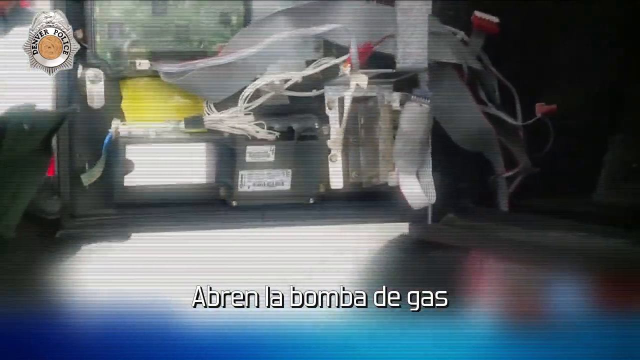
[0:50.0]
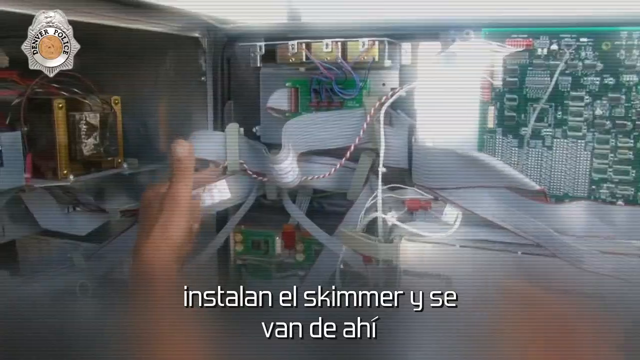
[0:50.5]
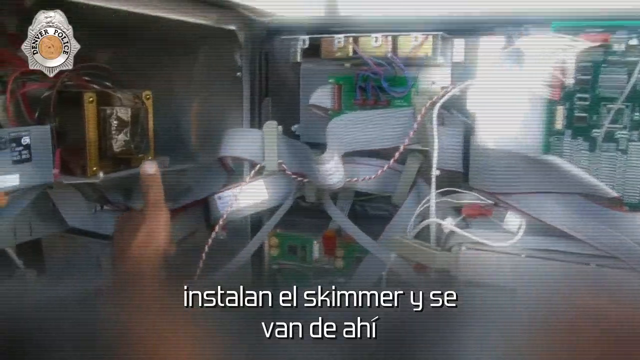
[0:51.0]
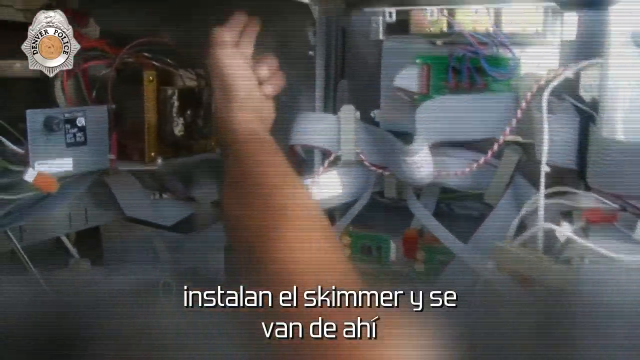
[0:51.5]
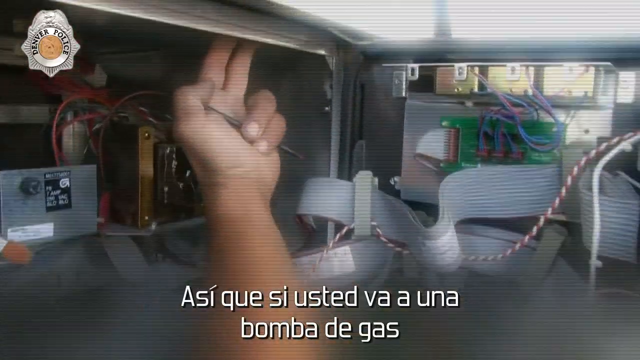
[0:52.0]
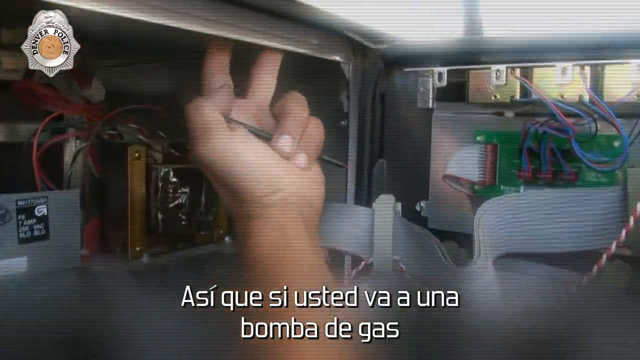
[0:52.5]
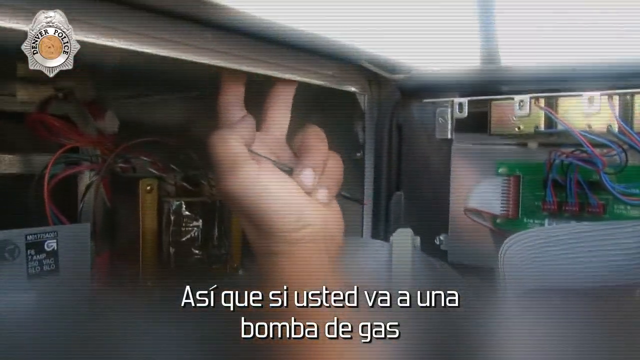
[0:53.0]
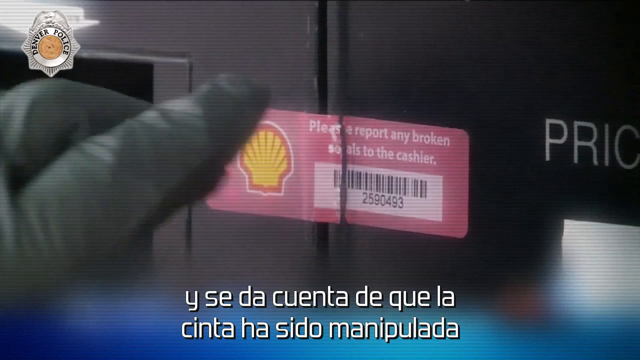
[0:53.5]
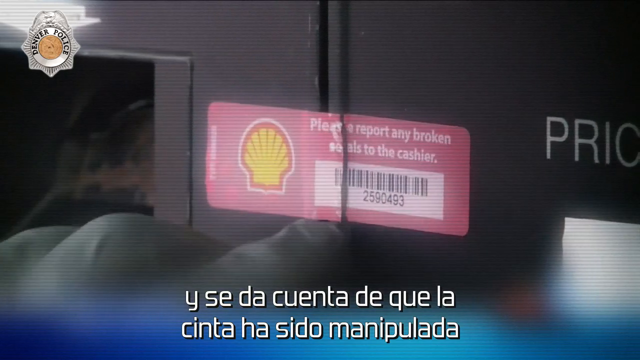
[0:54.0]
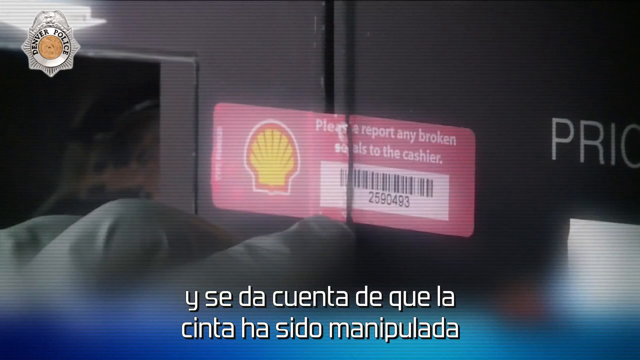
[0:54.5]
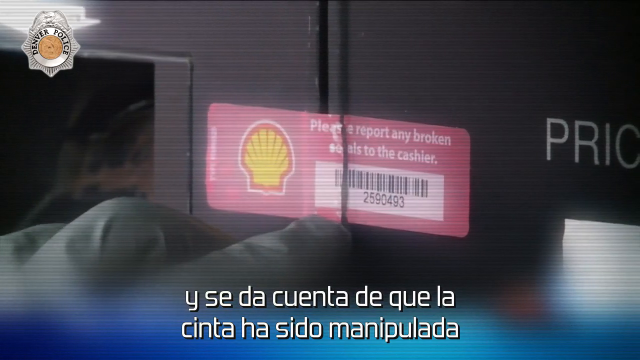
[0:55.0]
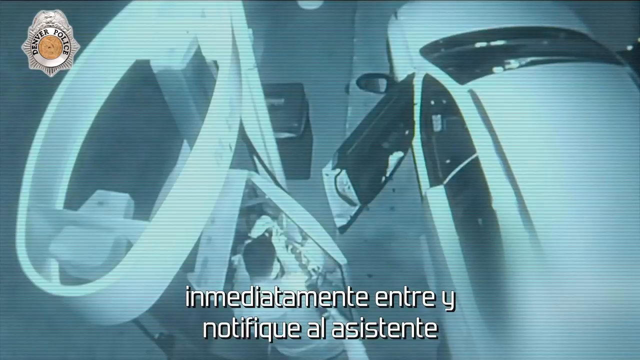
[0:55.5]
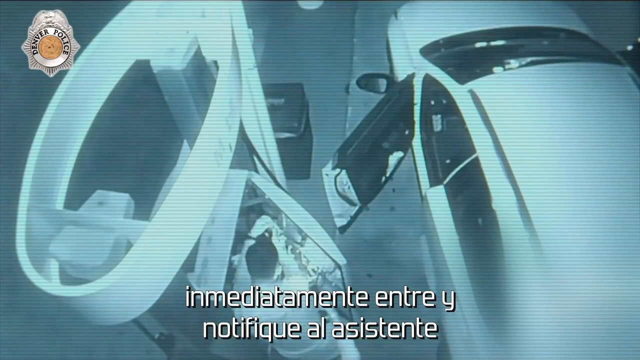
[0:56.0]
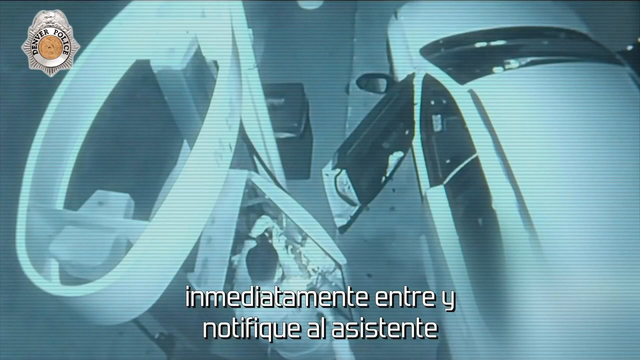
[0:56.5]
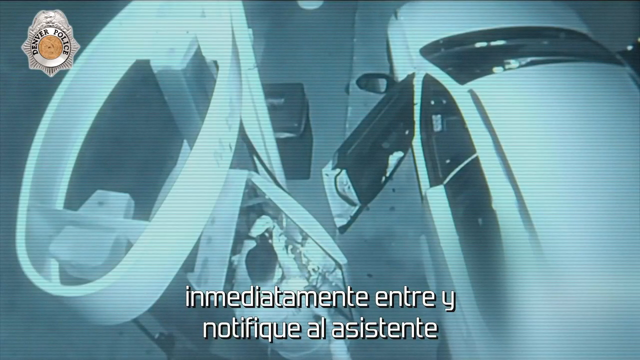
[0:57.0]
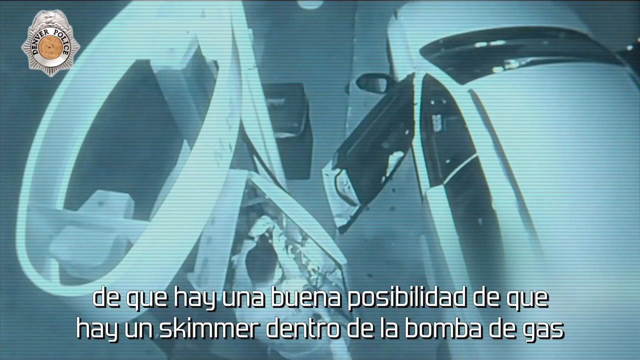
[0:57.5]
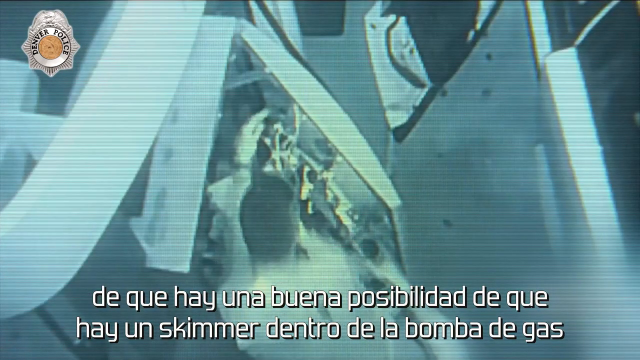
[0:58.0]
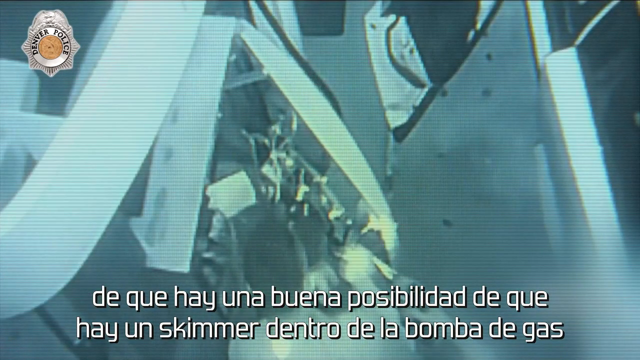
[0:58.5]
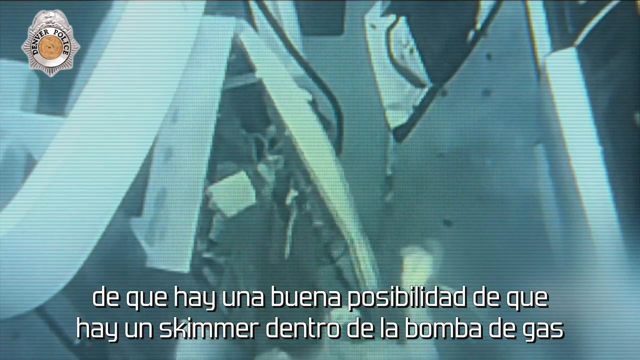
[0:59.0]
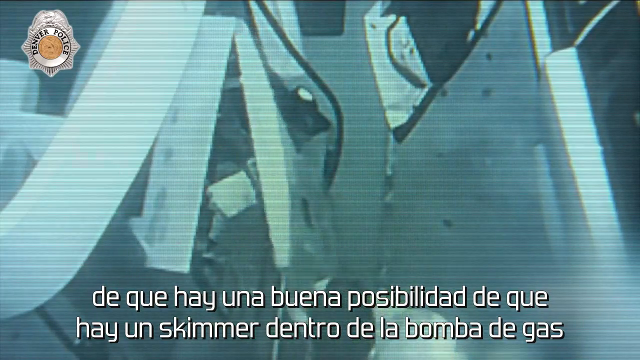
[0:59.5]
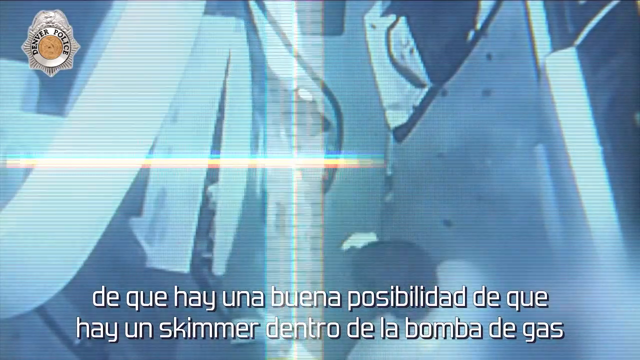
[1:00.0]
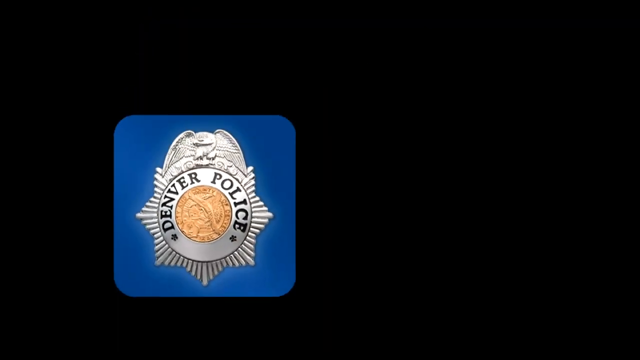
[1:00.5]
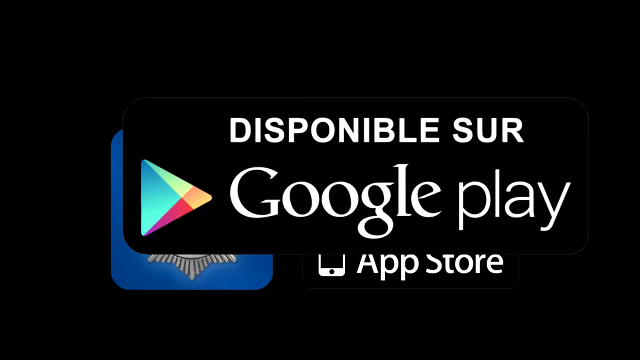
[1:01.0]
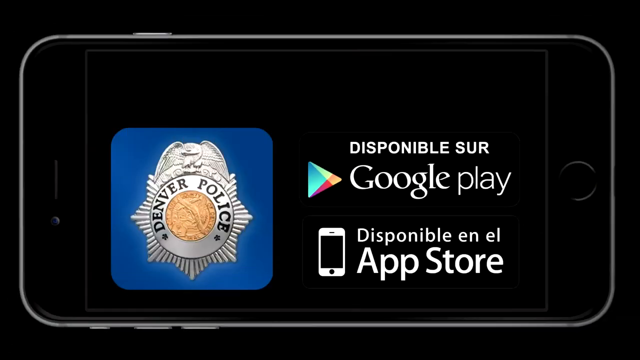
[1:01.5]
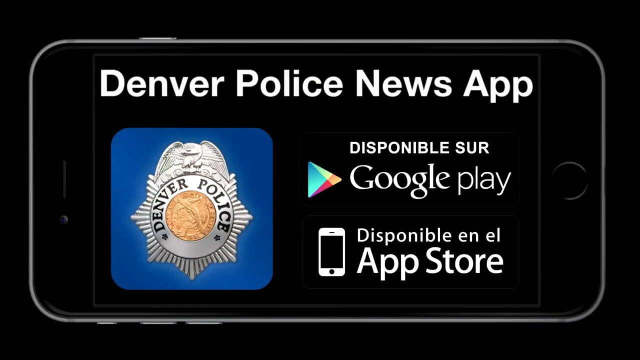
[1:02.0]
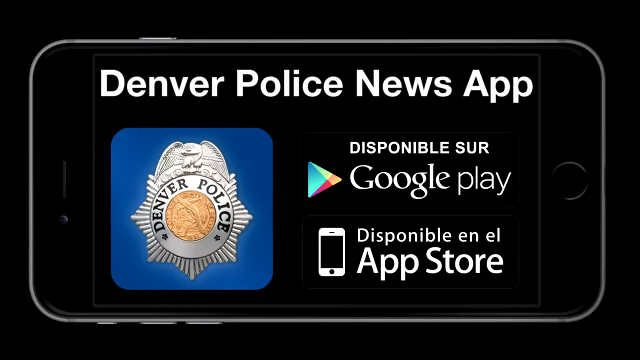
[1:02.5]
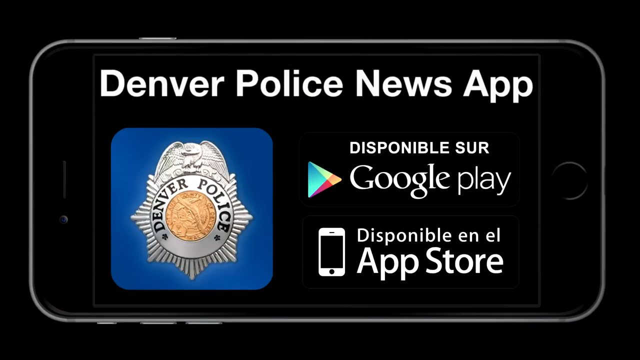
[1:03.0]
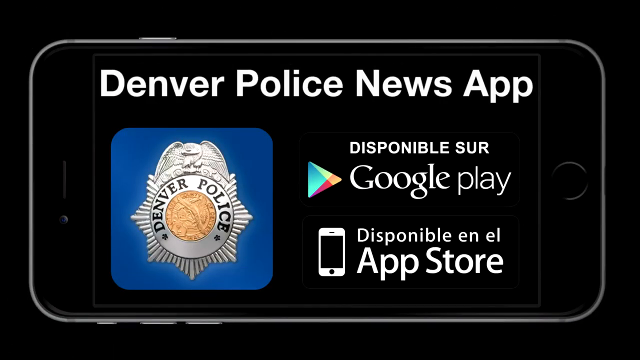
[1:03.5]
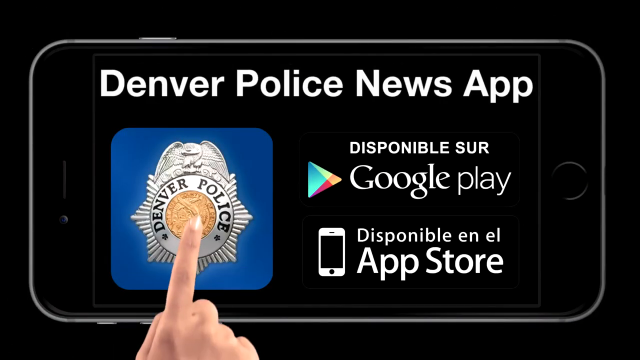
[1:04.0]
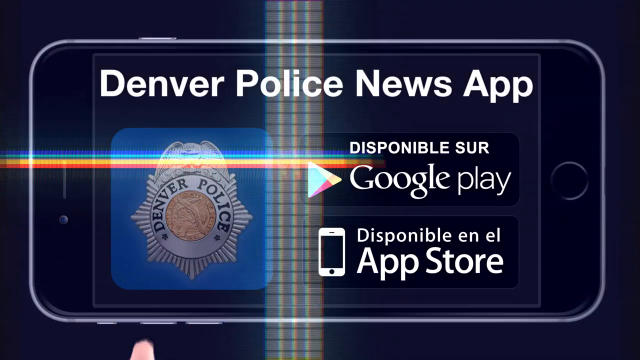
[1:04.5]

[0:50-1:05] The inside of the machine is shown, and the Shell seal has been broken. Again the video shows a man installing the skimmer at night: the machine is drilled and opened, the skimmer installed, and the machine closed back up. The broken seal shows it has been opened and is no longer safe. The seal is pink with a barcode, white letters and a yellow Shell logo. At the end a logo appears with the text "Denver Police News app", along with the Denver Police name, a police badge, and Google Play and Apple Play for downloading it.